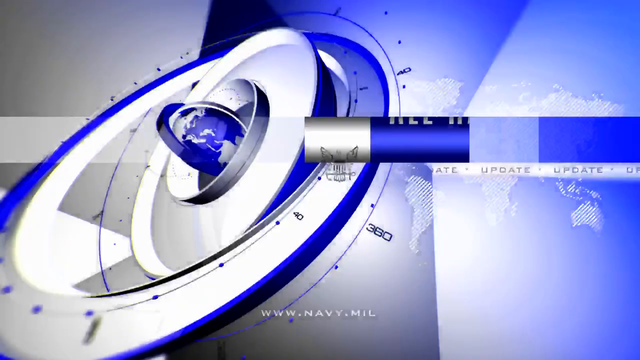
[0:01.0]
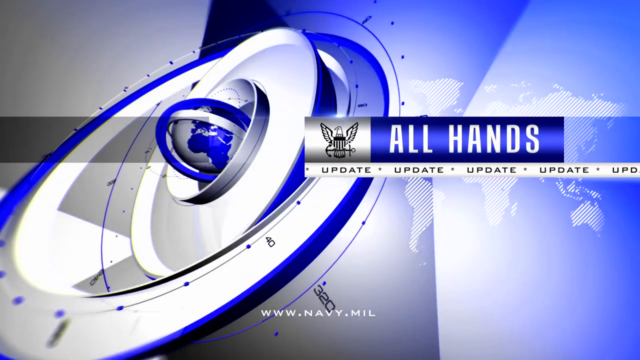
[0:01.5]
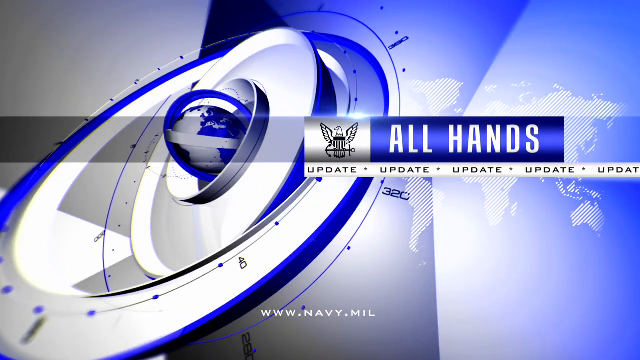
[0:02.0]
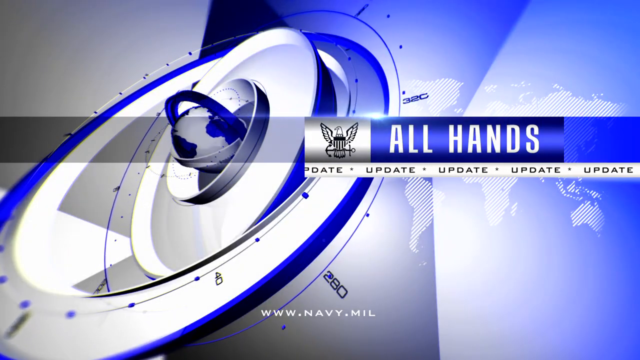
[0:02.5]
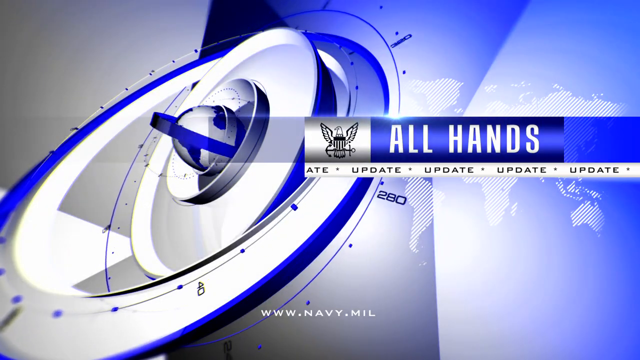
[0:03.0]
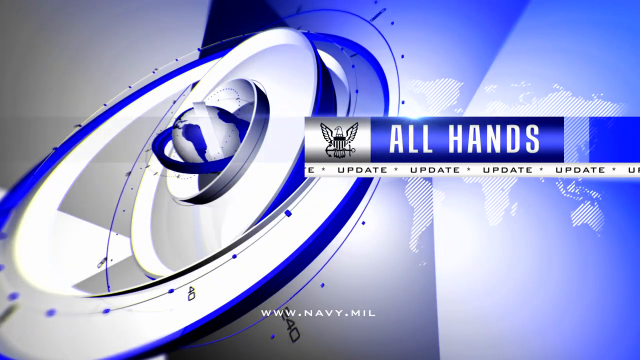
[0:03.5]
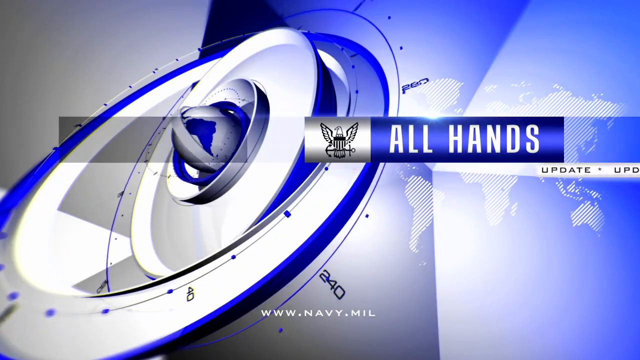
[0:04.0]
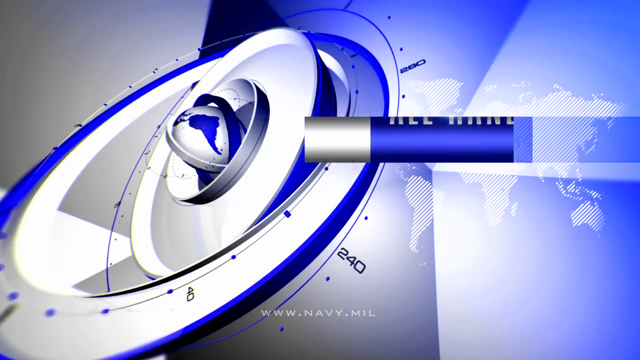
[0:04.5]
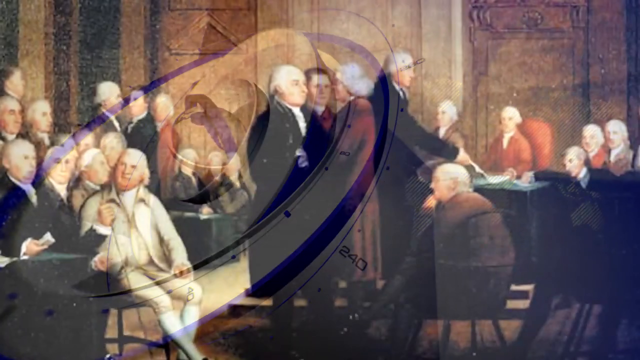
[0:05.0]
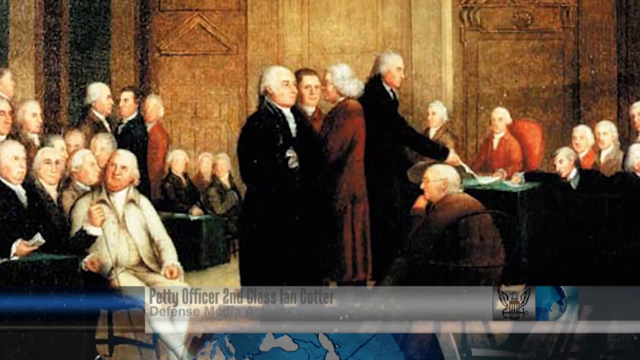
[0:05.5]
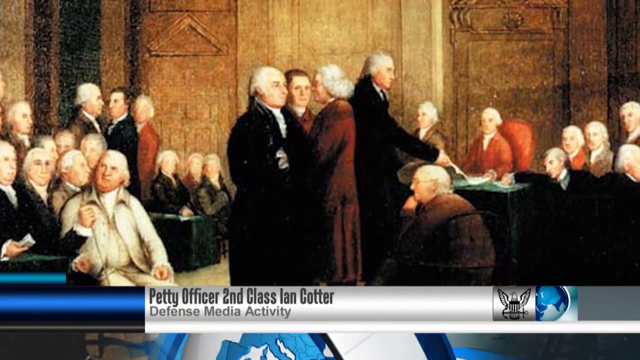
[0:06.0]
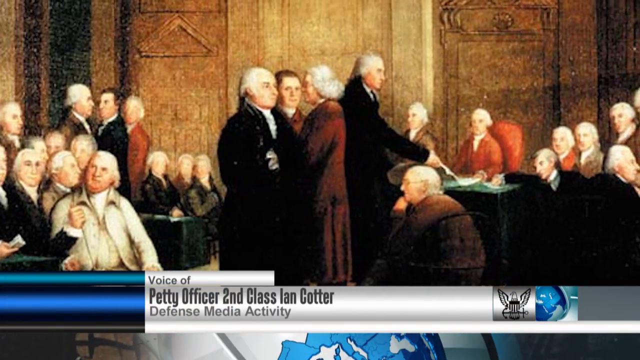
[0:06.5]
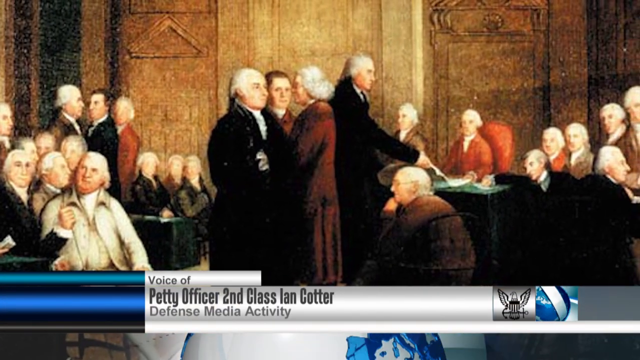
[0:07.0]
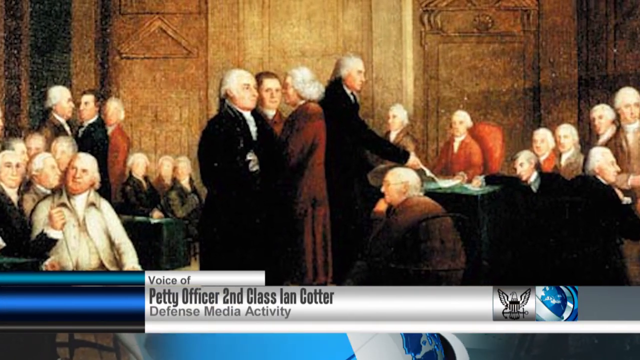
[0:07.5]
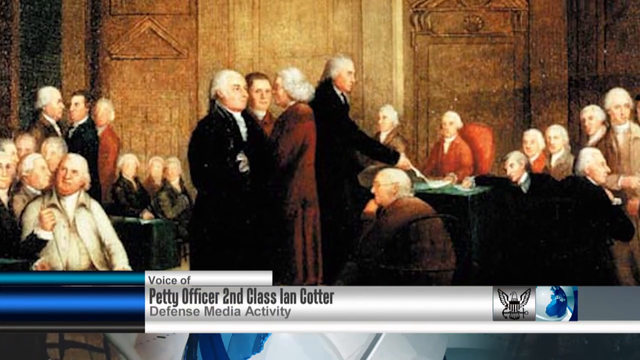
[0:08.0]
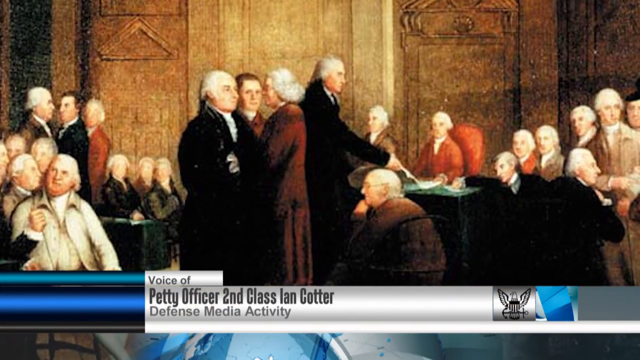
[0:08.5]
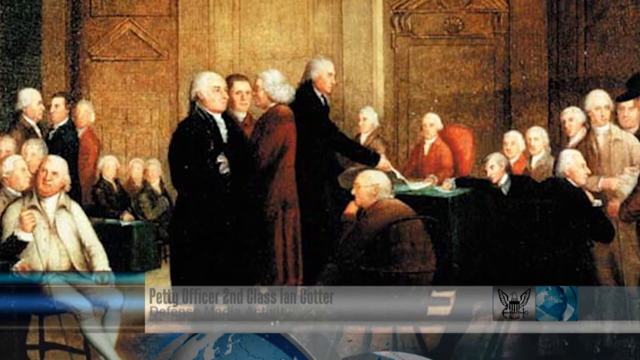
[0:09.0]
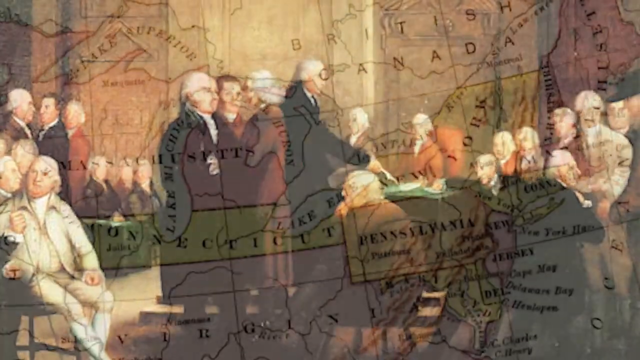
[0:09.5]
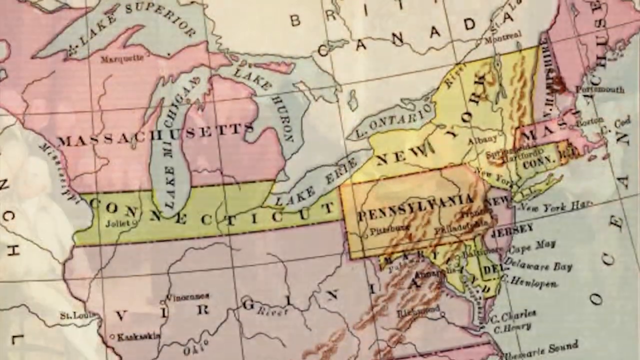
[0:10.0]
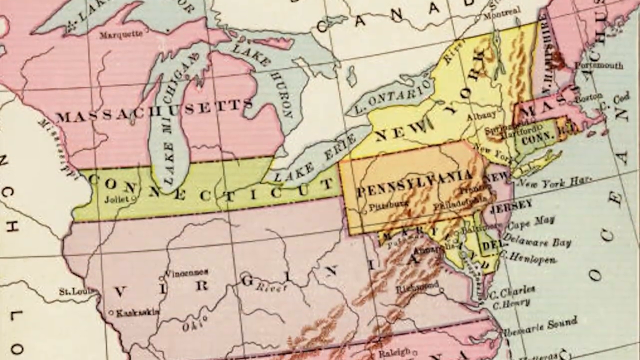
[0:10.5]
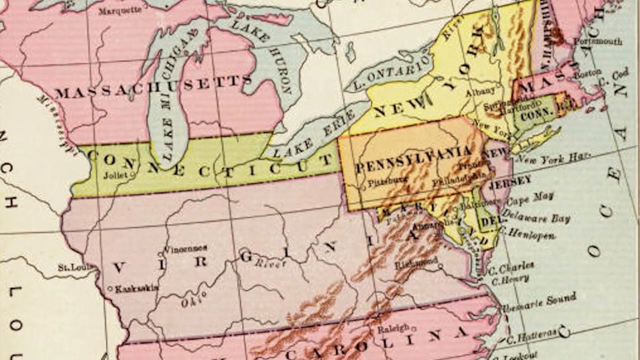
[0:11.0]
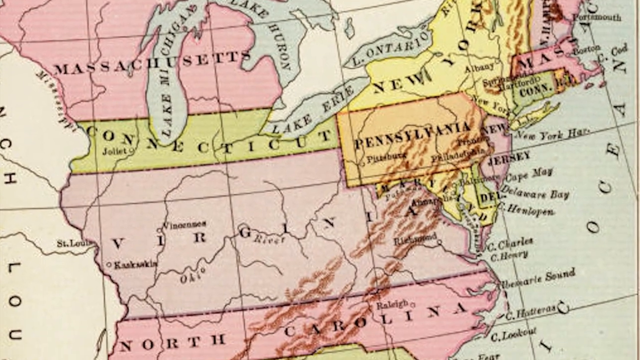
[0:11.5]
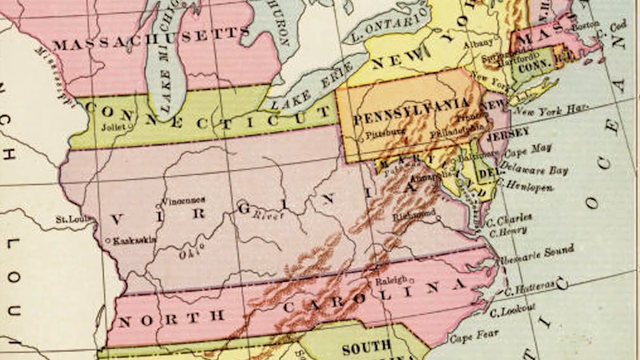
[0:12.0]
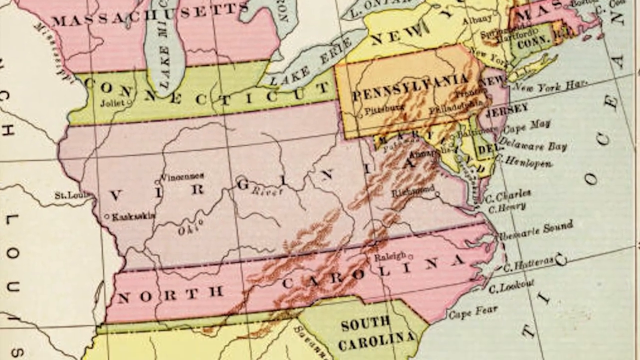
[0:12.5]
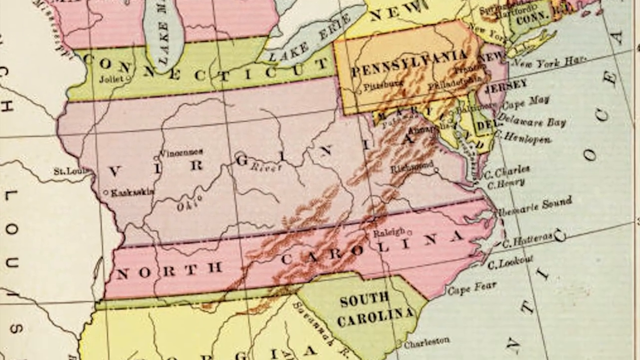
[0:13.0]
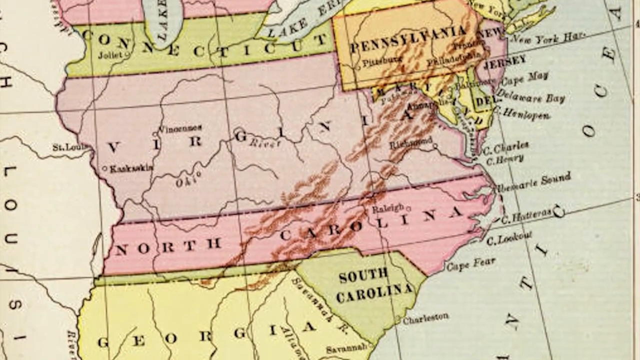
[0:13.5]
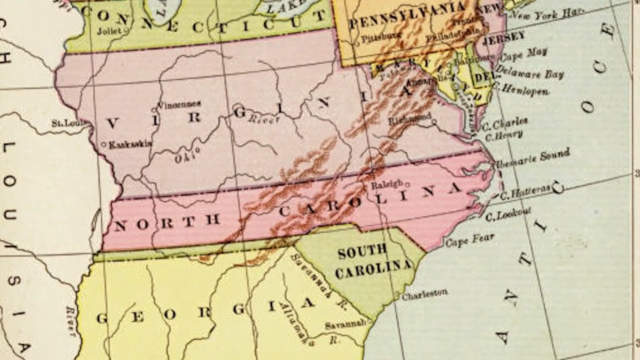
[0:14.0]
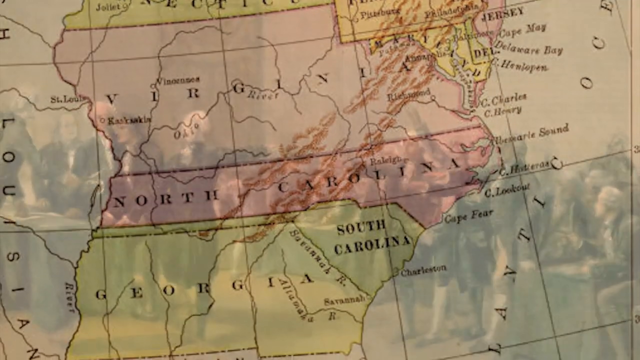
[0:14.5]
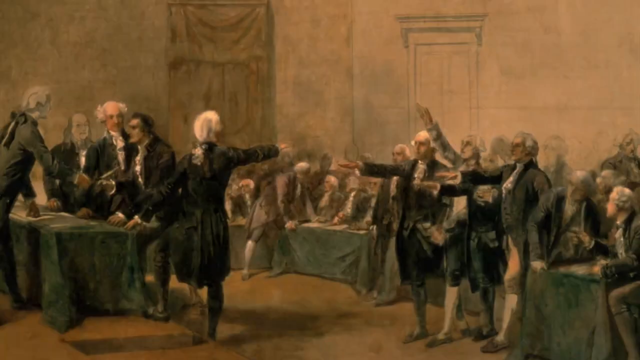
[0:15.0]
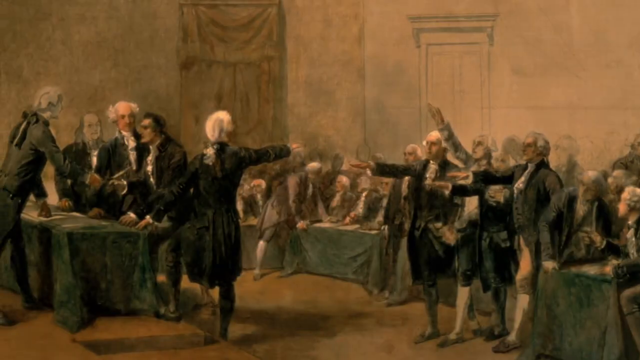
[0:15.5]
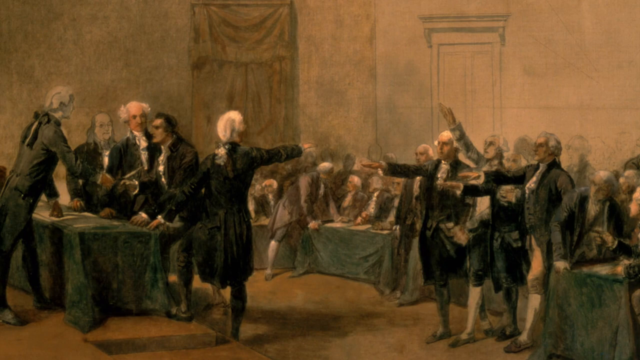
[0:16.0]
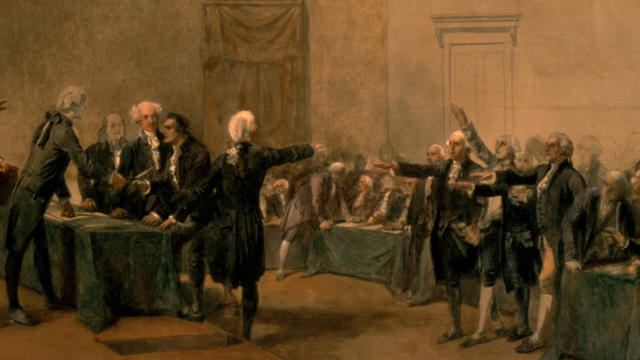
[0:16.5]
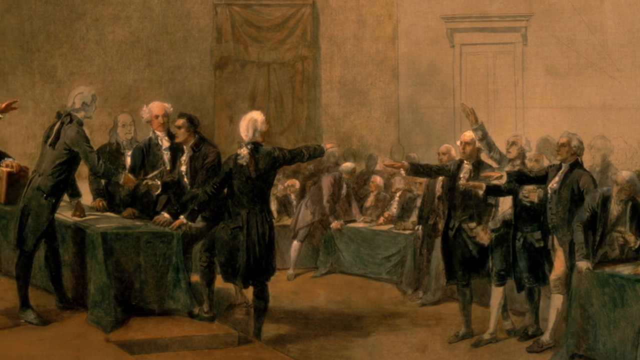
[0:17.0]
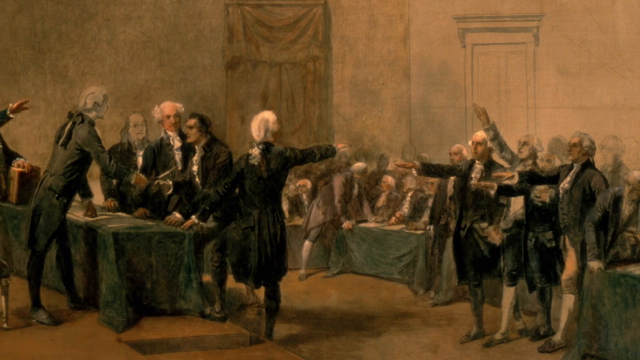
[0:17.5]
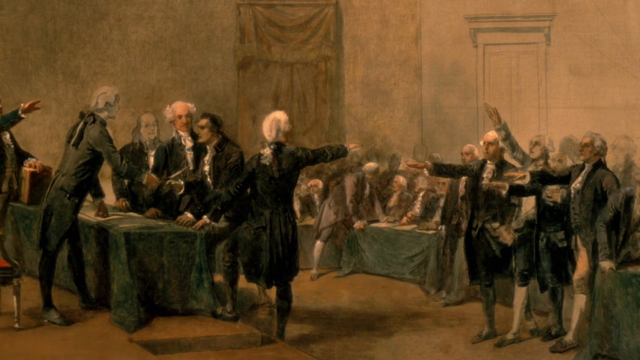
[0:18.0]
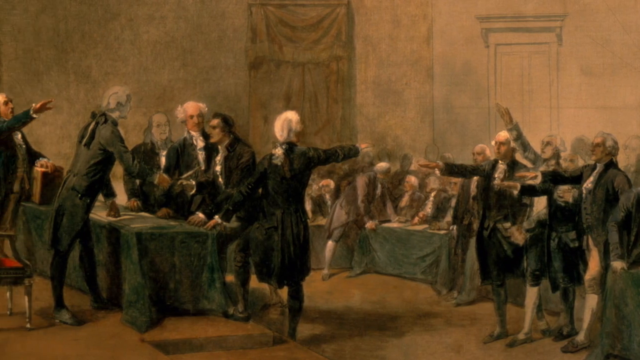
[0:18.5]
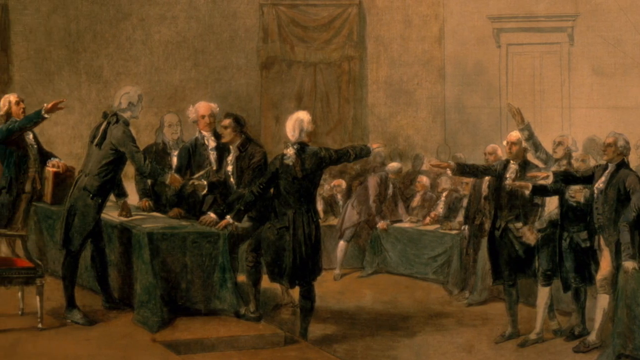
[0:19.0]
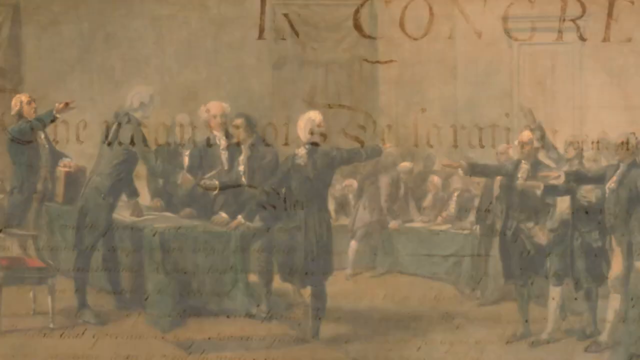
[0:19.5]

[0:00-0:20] The video opens with an overlay similar to those used by many news networks, featuring a compass and a global map in a blue, white, black and gray color scheme. In the center is an American Navy insignia and the words "All Hands" in white capital letters on a blue background. Underneath, a trailing sign like a headline repeatedly says "update". At the bottom center of the screen is "www.navy.mil". The scene transitions to a picture from the time when America was fighting for its independence. At the bottom, a subtitle or sign with a white background and black letters reads "voice of", with "petty officer second class Ian Cotter" and "defense media activity" underneath; it spans across the picture from left to right. Next comes a map of the original 13 colonies, spanning from north to south, then another painting from the era of the American War for Independence, and finally the Declaration of Independence.